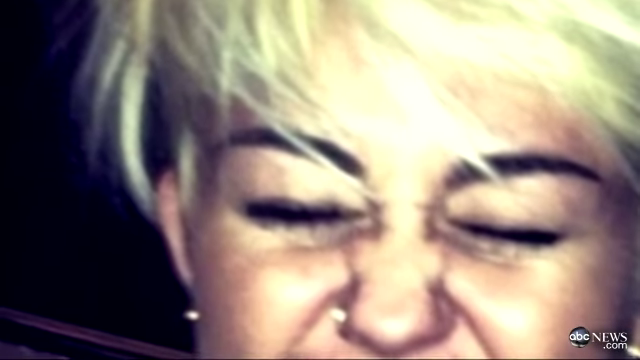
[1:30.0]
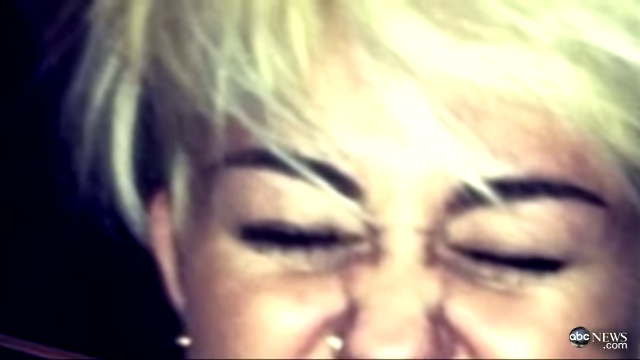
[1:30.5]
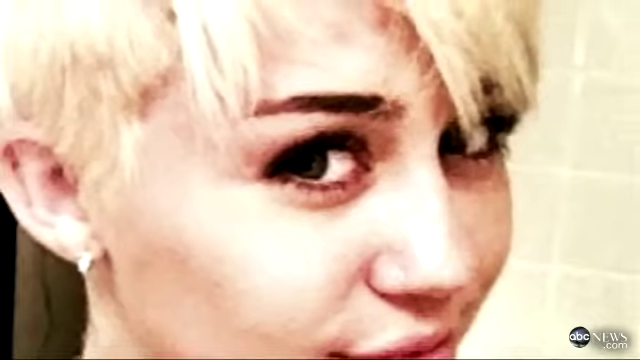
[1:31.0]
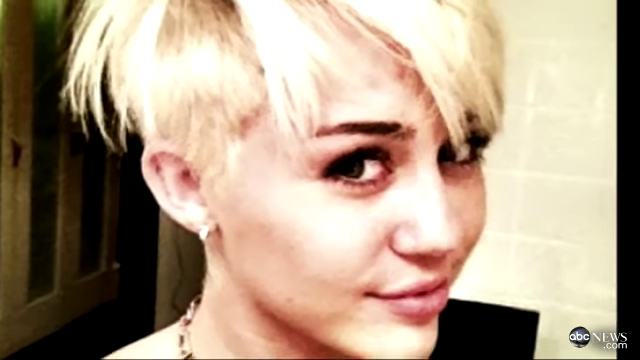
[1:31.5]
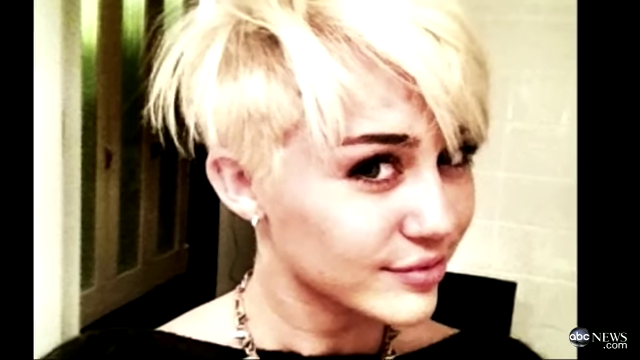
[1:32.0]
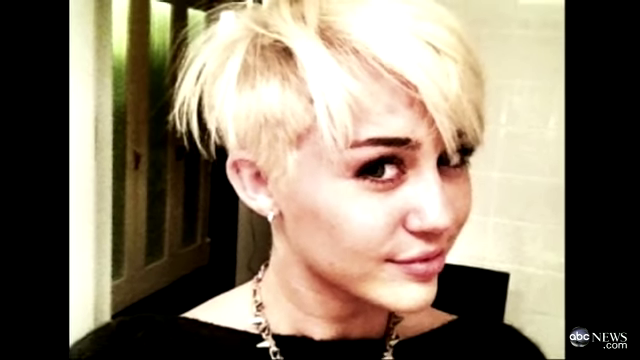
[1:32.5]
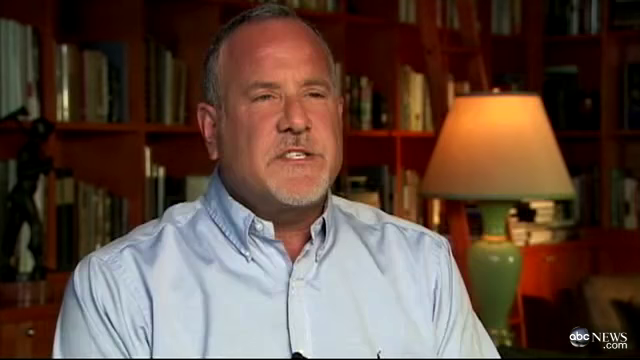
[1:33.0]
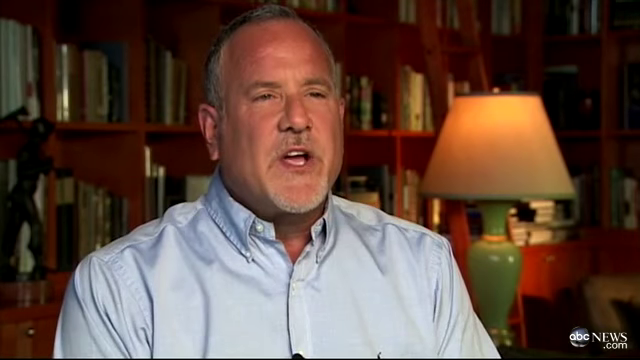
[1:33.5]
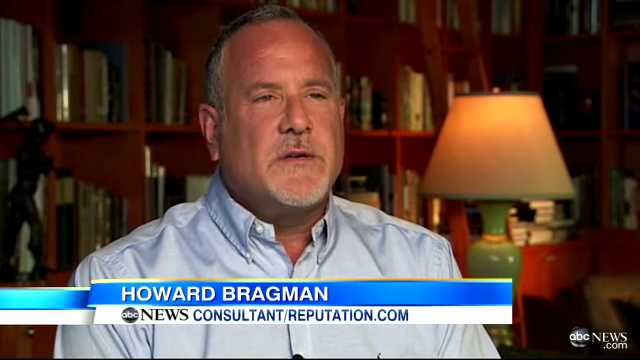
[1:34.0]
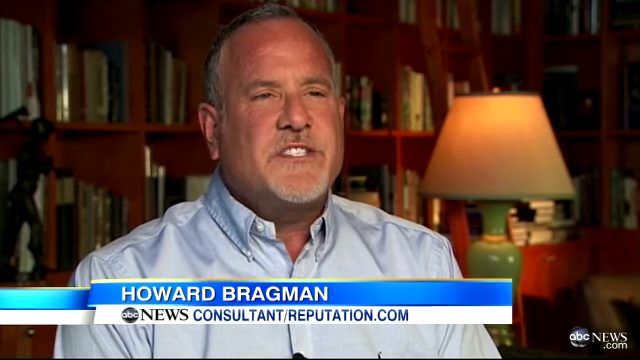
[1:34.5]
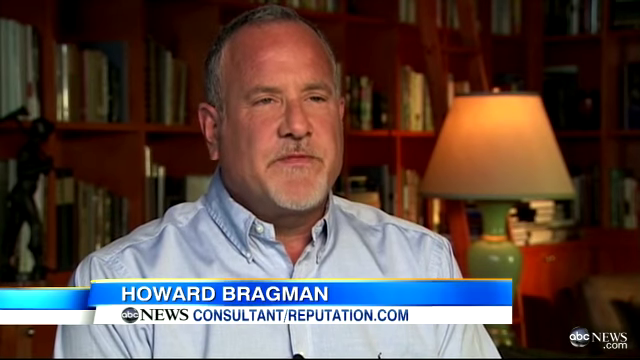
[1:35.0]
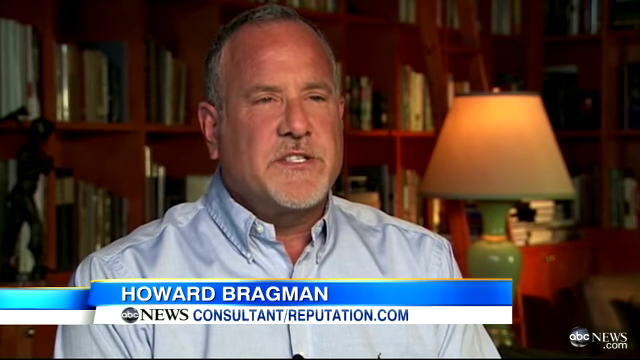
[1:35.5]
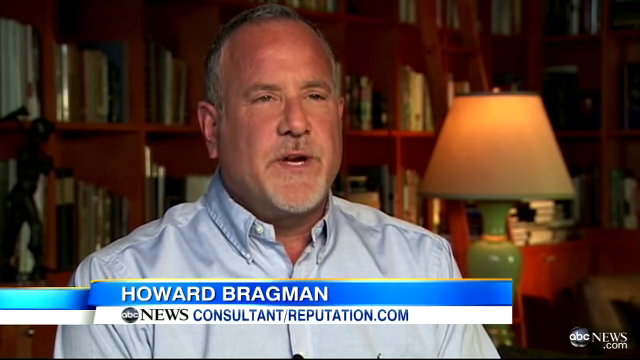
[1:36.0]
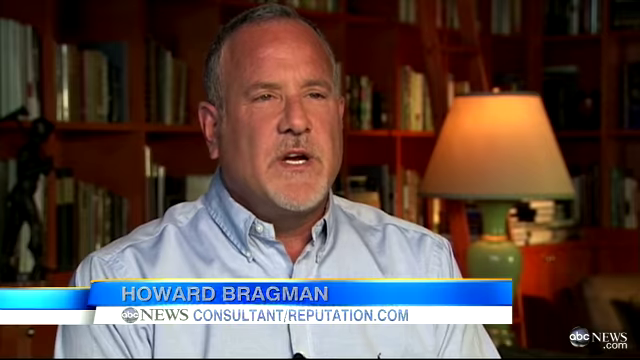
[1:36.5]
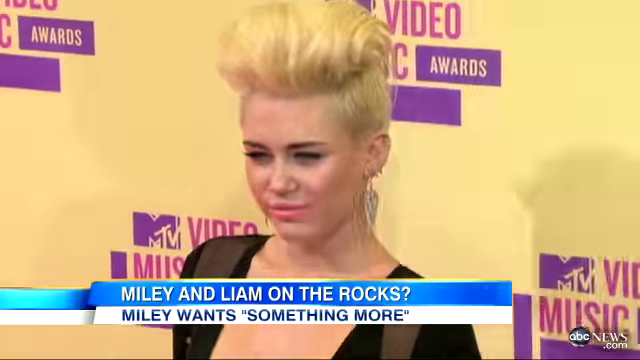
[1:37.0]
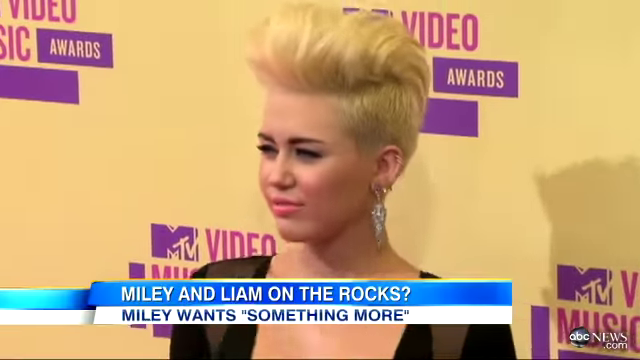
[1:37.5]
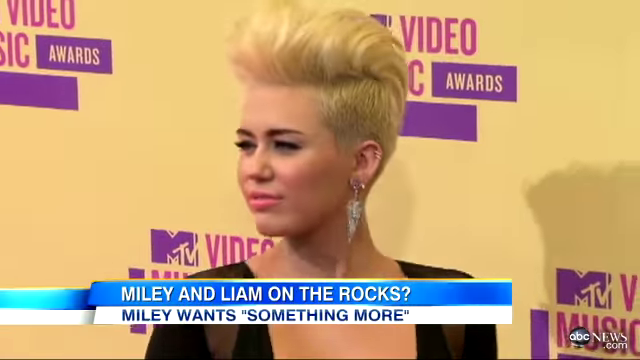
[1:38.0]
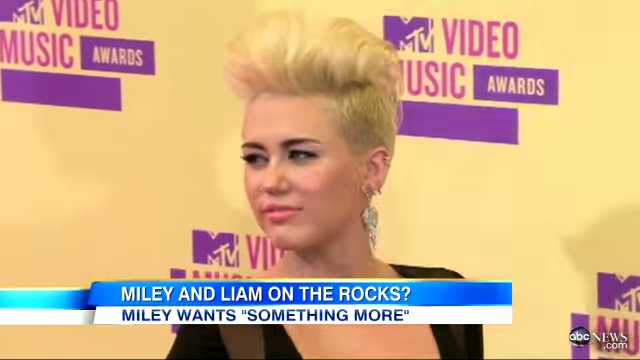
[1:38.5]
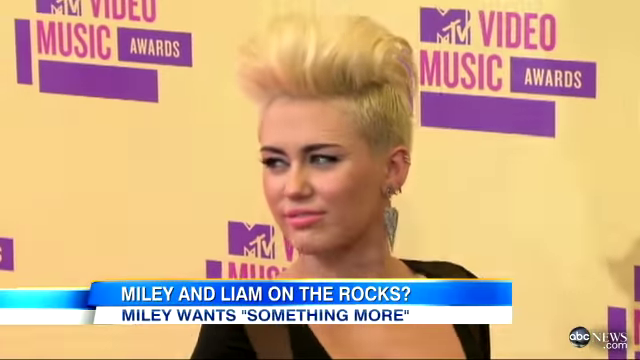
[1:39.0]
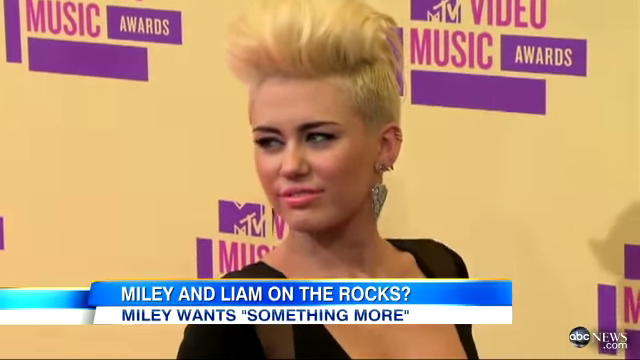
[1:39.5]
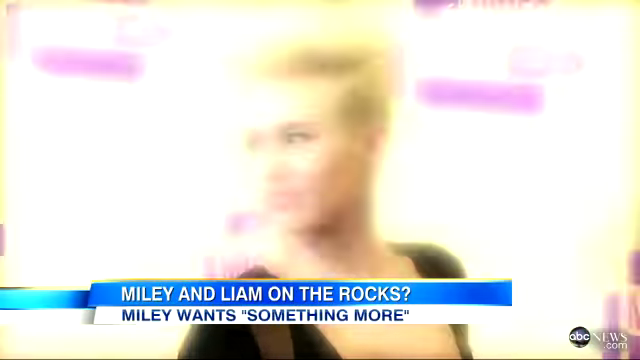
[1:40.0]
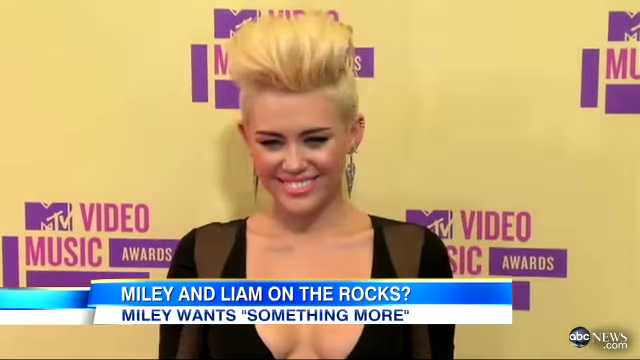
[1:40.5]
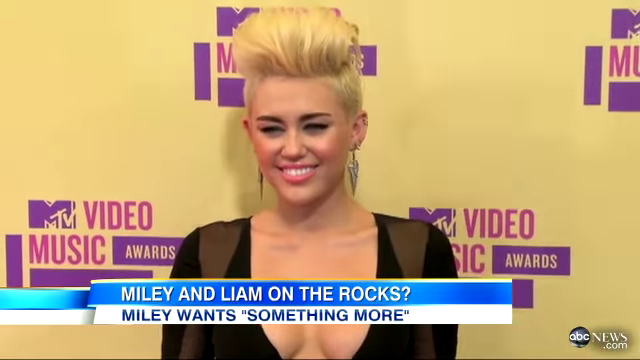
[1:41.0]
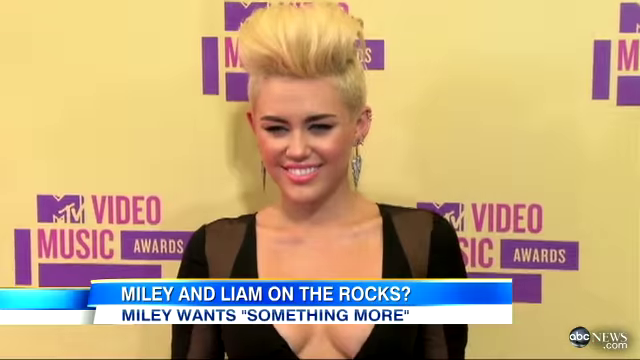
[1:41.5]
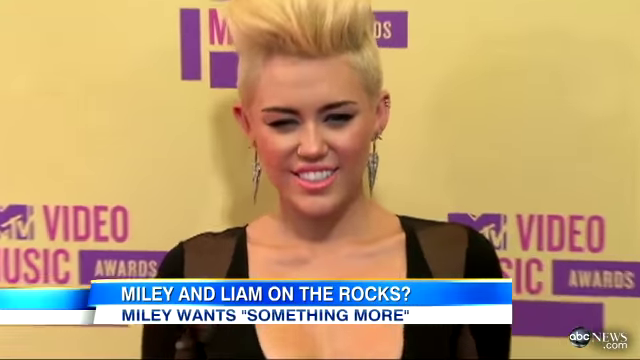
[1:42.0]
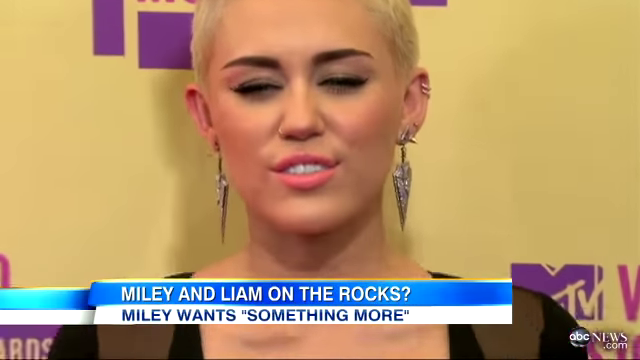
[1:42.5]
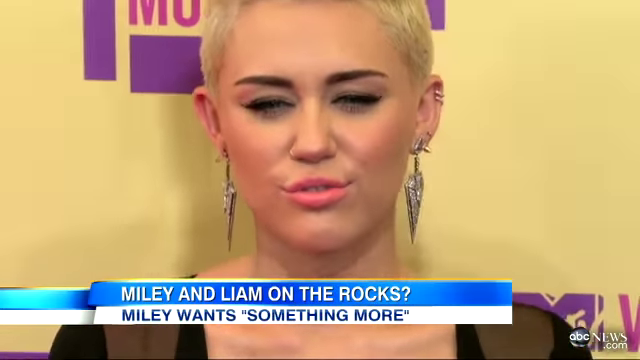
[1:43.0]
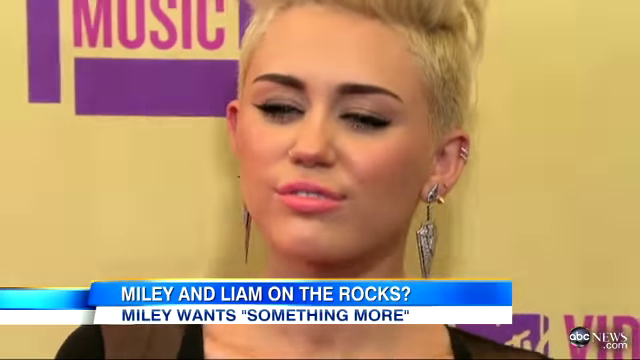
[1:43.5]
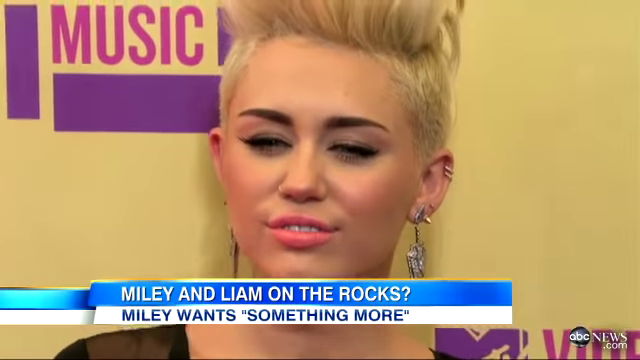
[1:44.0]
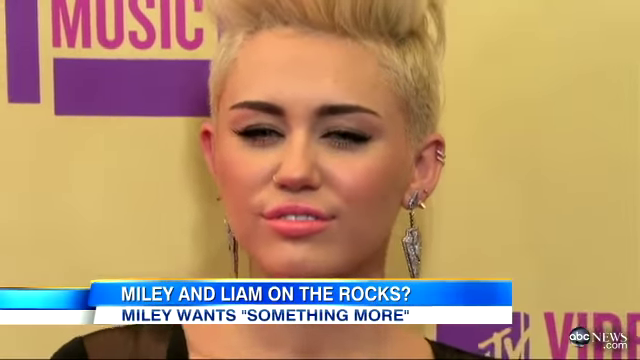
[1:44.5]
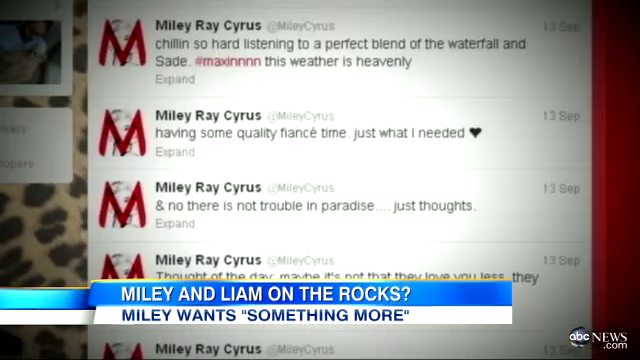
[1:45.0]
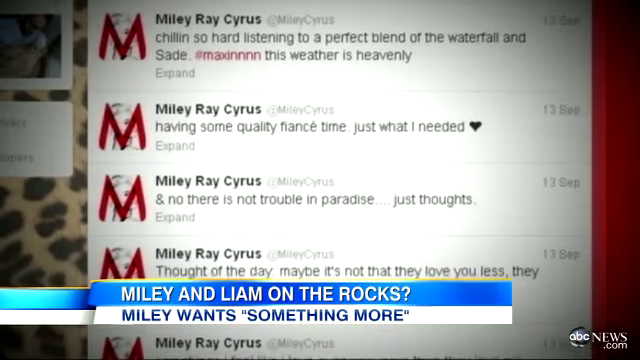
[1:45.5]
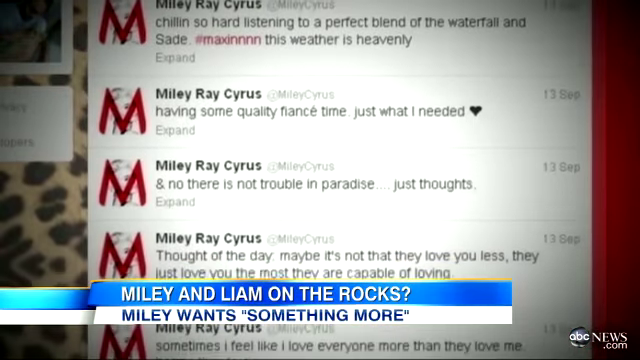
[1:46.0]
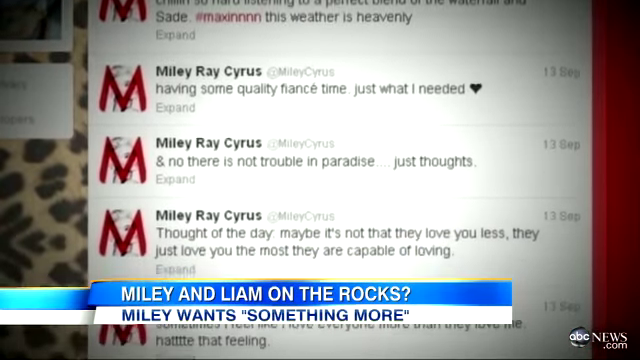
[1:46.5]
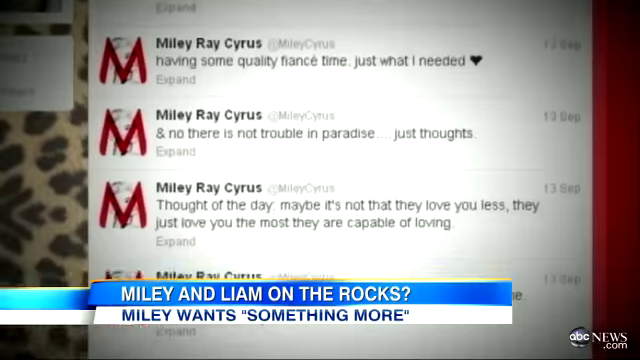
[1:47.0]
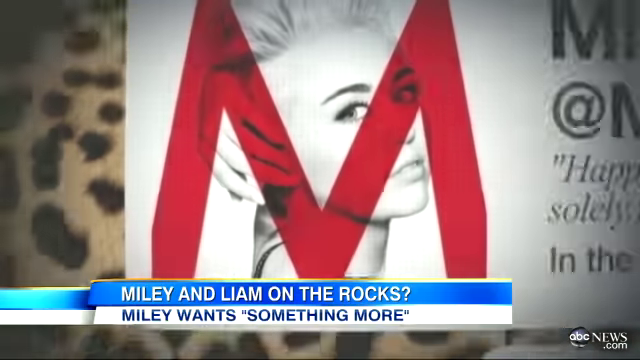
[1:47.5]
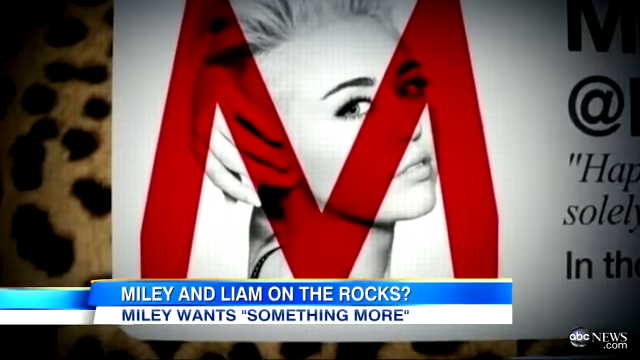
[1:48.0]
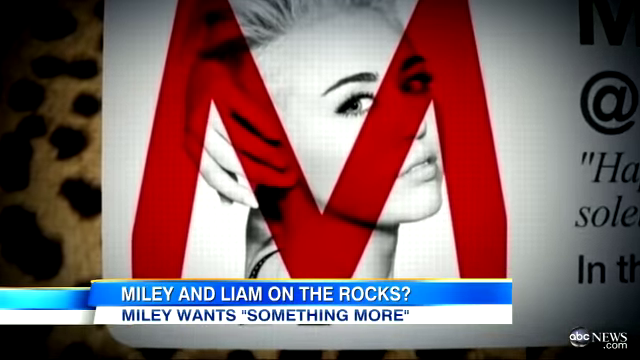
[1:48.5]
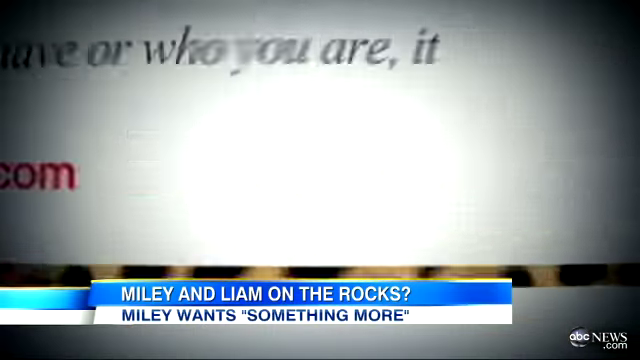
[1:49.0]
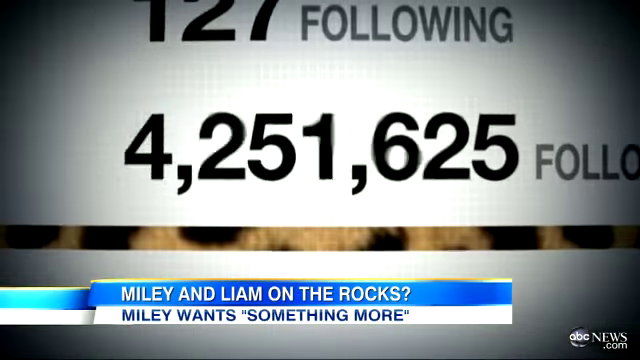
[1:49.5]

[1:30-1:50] Miley Cyrus appears with roughly half of her head shaved and blonde hair on top. The segment features Howard Bragman, and then shows her all dressed up at the MTV Video Awards, her blonde hair kind of spiked, the side of her head shaved, and diamond earrings on. The caption reads "Miley and Liam on the rocks, Miley wants something more." A series of her tweets is shown, including "no, there's not trouble in paradise. These are just thoughts, having some quality fiance time" and "thought of the day. Maybe it's not that they love you less. They just love you the most you're capable of loving." Her follower count is also shown.